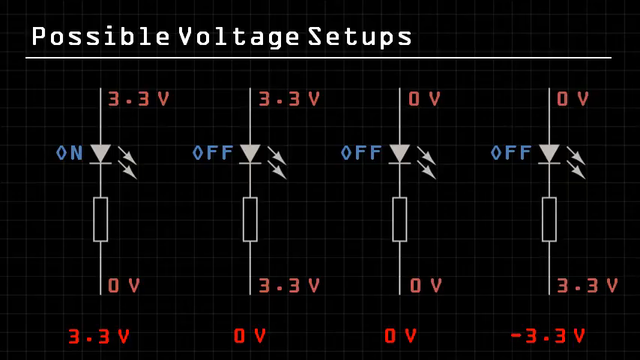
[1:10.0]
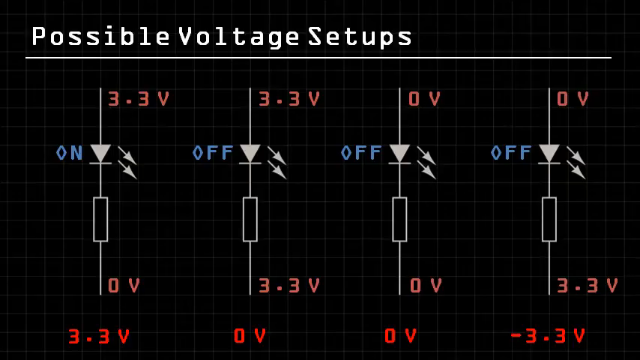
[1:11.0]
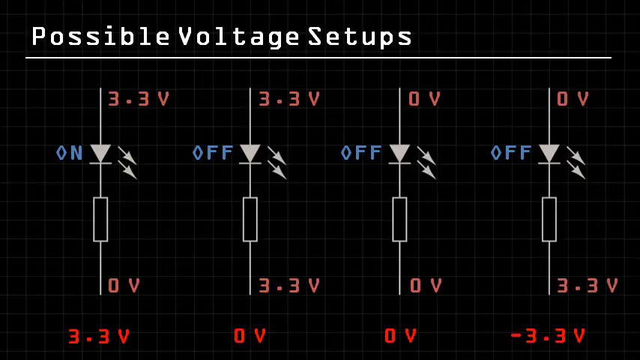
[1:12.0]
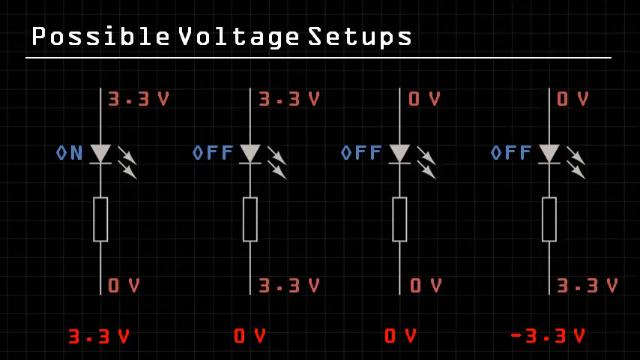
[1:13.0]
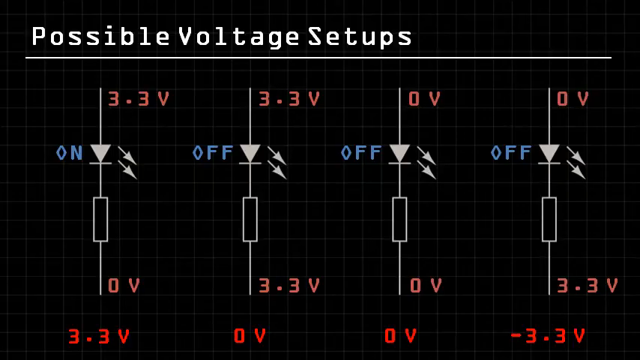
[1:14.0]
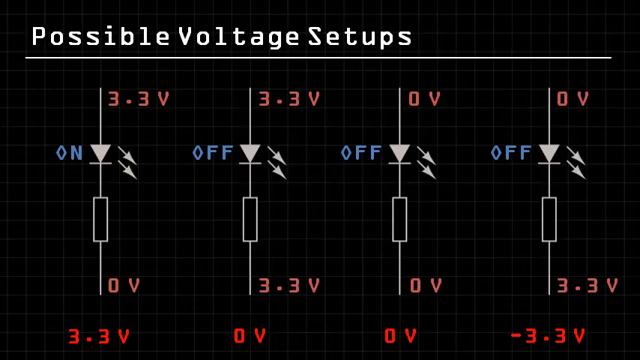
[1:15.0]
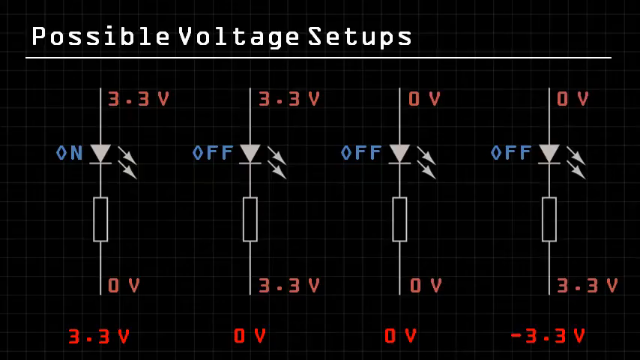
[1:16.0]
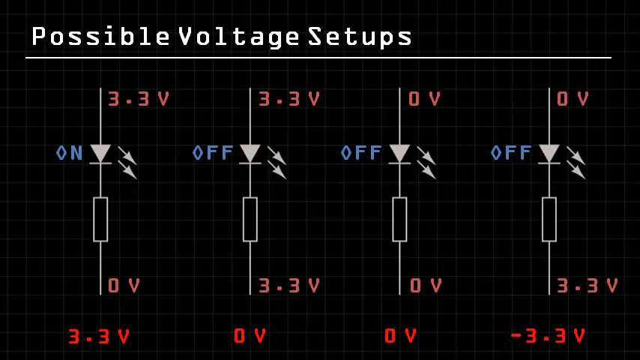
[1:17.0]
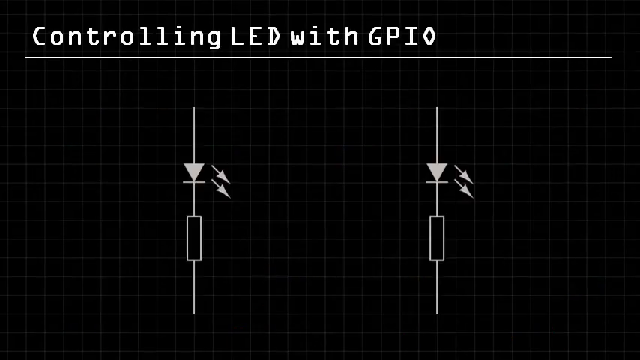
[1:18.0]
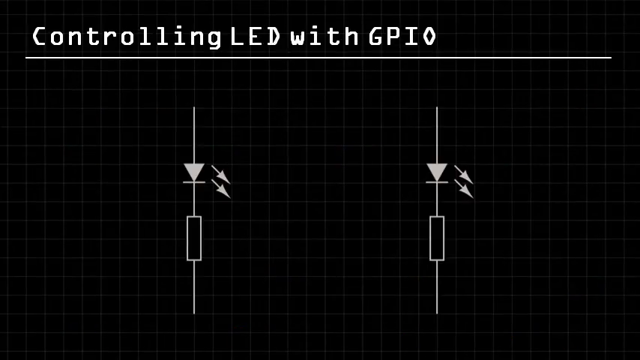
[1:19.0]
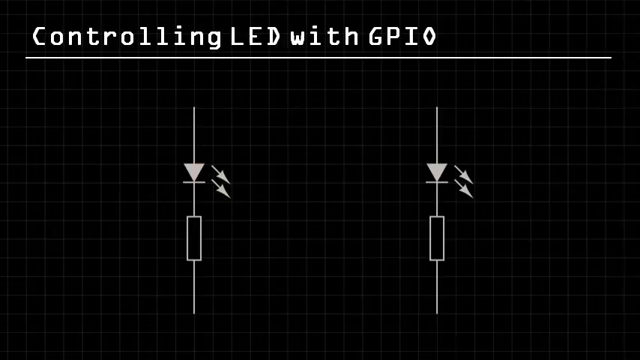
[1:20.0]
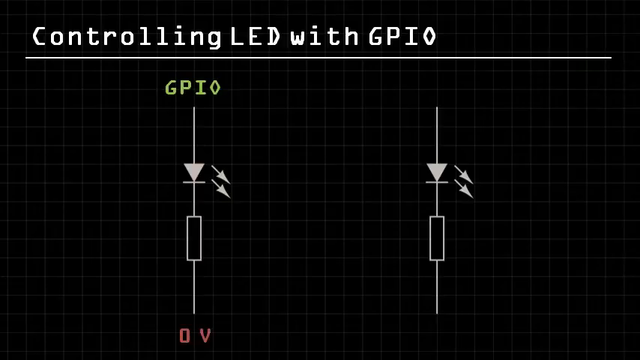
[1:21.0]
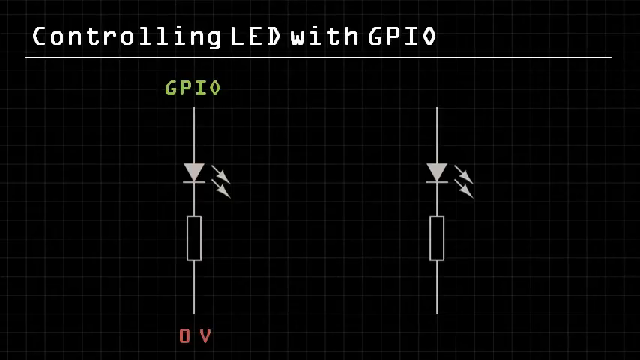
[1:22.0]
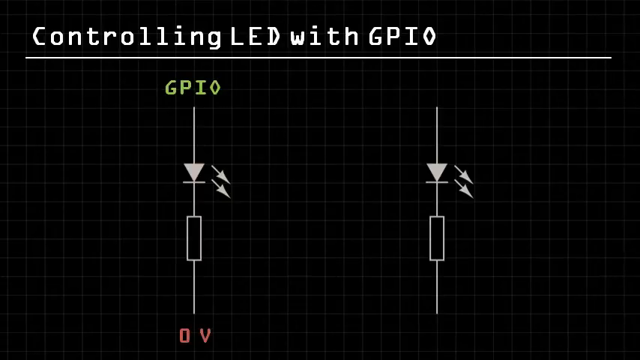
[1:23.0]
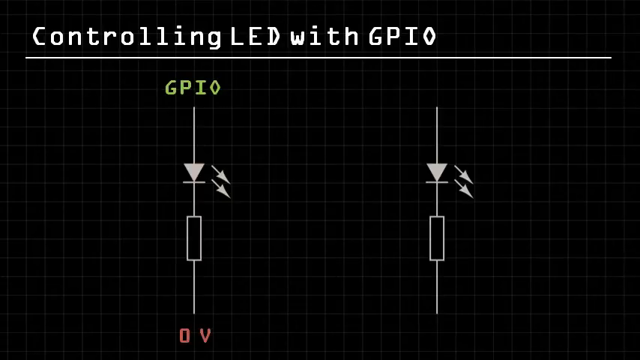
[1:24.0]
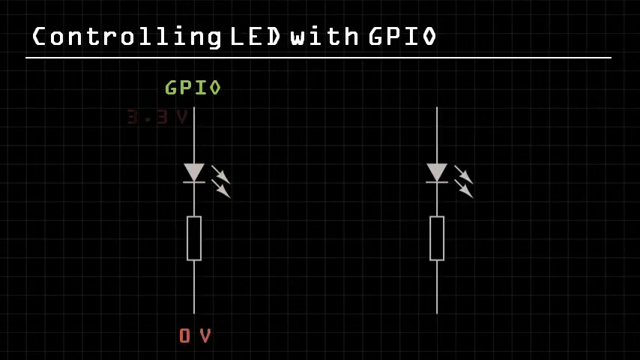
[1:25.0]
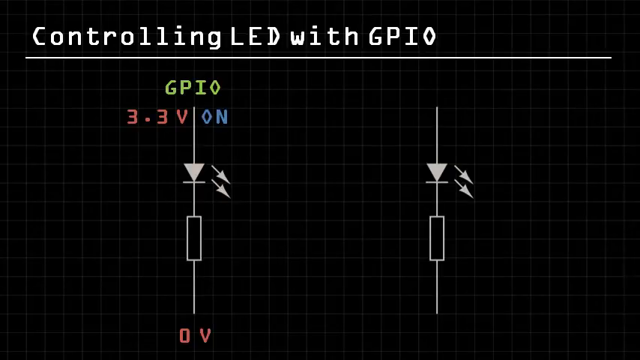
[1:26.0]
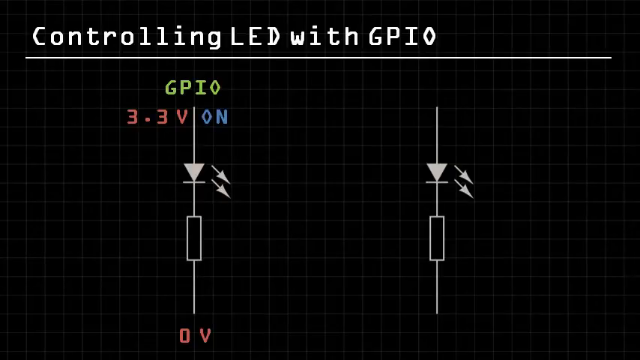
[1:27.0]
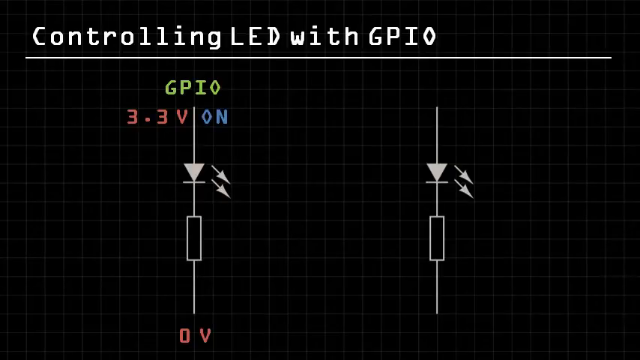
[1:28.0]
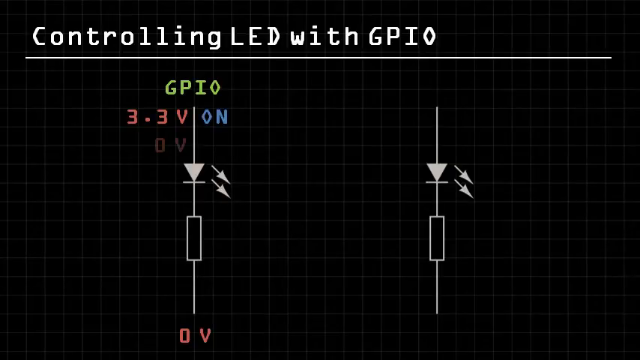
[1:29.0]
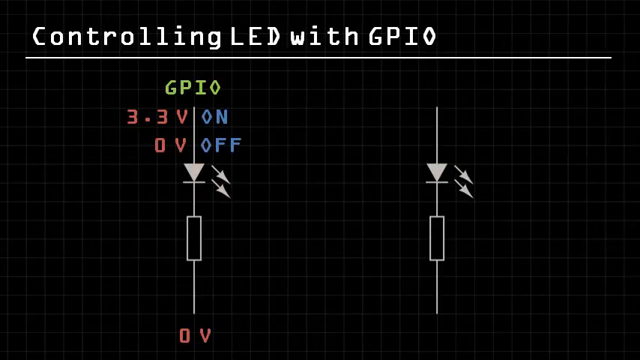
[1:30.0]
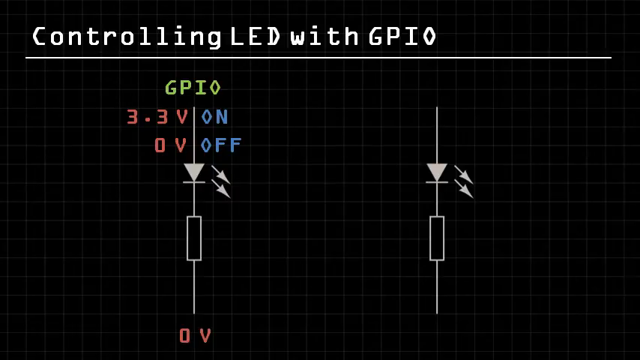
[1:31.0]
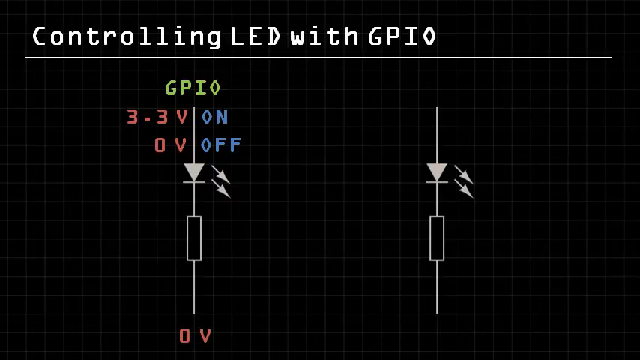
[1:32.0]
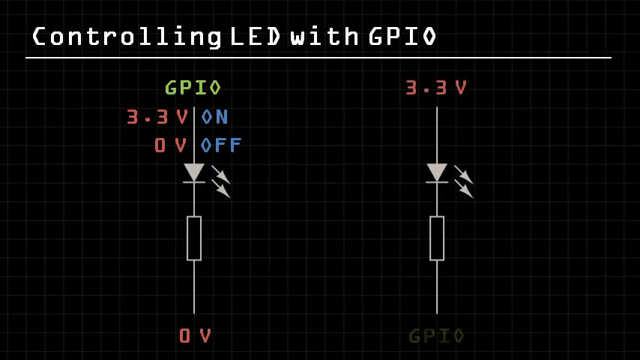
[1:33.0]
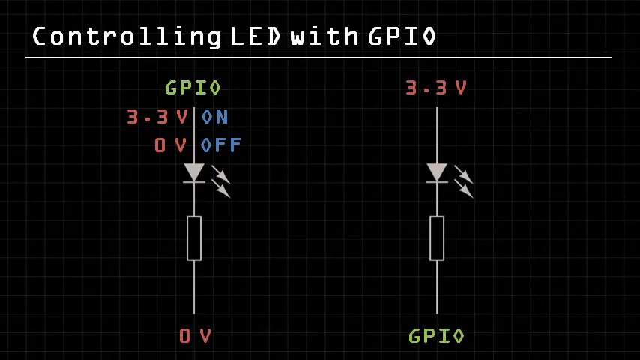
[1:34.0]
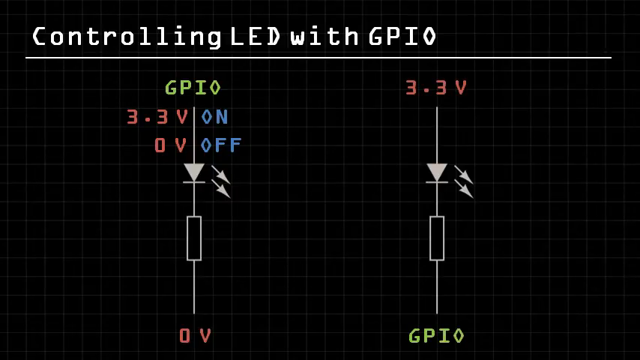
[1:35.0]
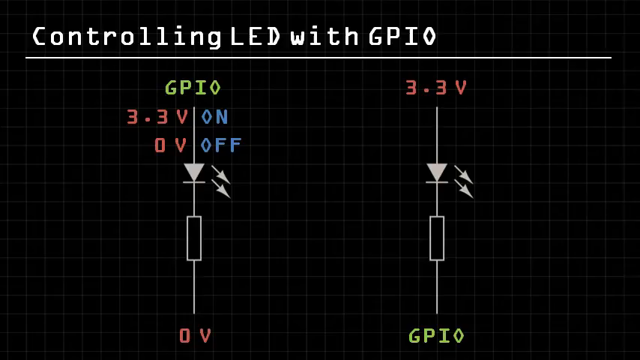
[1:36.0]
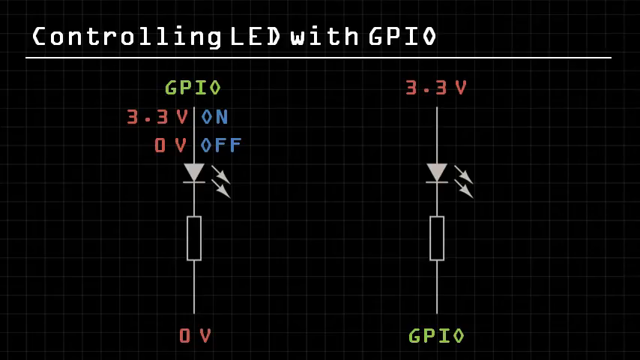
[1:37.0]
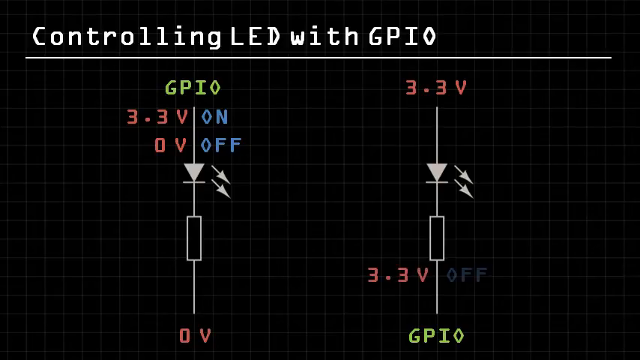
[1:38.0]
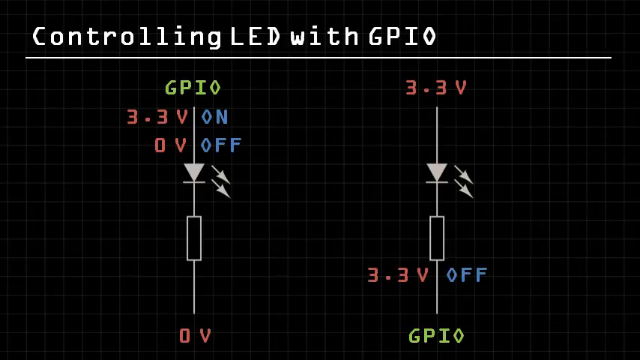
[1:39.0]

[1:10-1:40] The same diagrams are still shown with the same information: the voltage on top, the ON and OFF labels next to the triangles, the bottom voltages below the rectangles, and the red calculations at the very bottom. That screen disappears and another comes up called "Controlling LED with GPIO". Two diagrams appear that look very similar to the earlier ones: a vertical line running all the way down, the triangle, a horizontal line attached at the triangle's bottom tip, two arrows coming off the triangle to the right, and the vertical line continuing down to meet the rectangle and then continuing on. The first diagram has green lettering reading "GPIO". Below it more text appears, with red text on the left and blue text on the right: first a red 3.3 volts with "ON" in blue to its right, and below that a red 0 volts with "off" in blue to its right. The diagram on the right has "GPIO" at the bottom, and a calculation appears above it in the same style: red 3.3 volts on the left and blue "off" on the right.